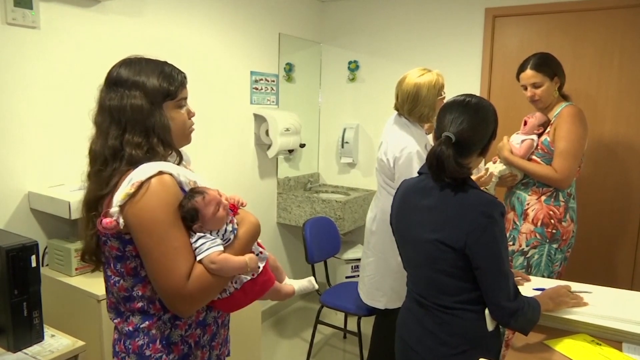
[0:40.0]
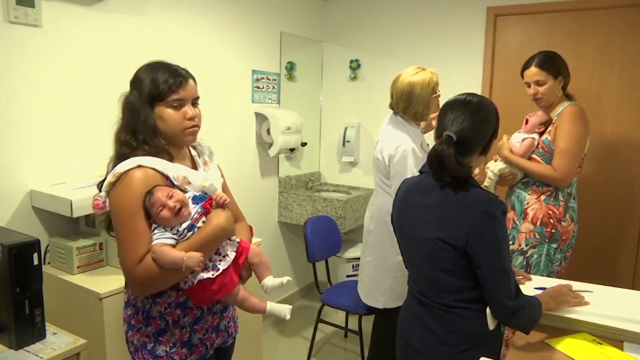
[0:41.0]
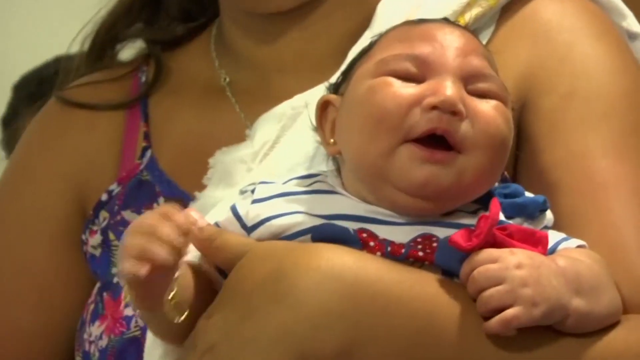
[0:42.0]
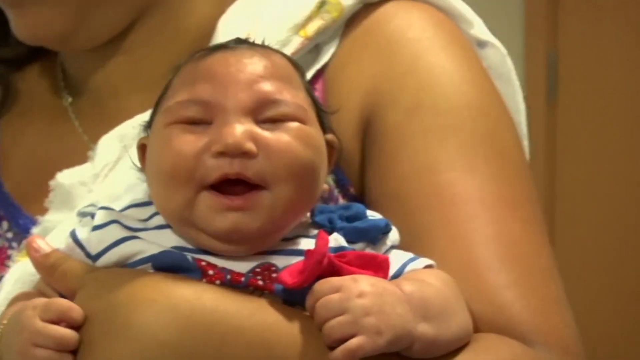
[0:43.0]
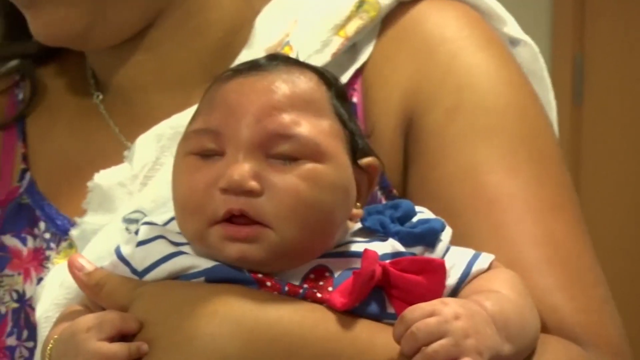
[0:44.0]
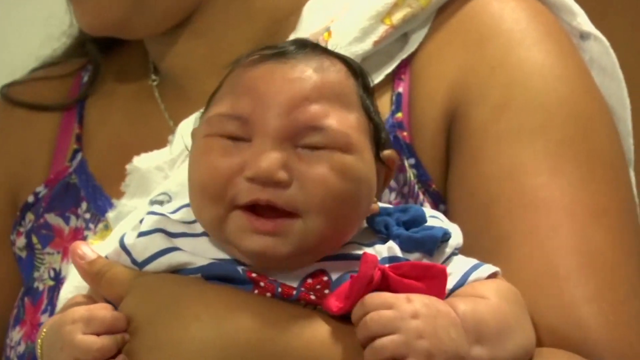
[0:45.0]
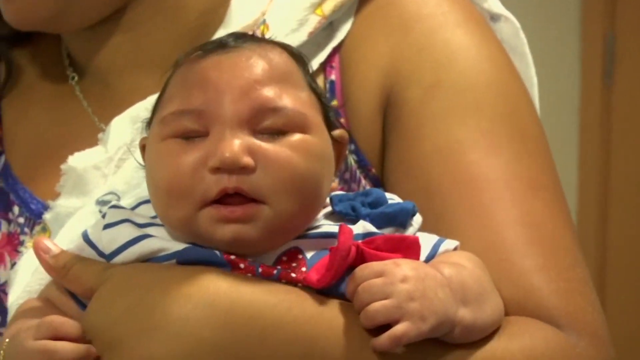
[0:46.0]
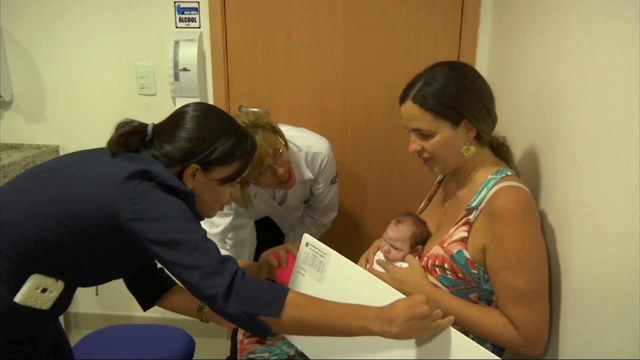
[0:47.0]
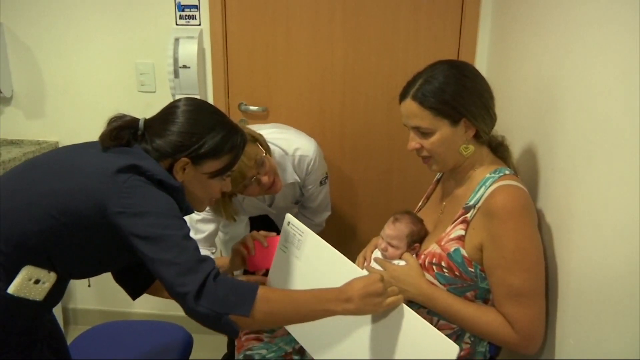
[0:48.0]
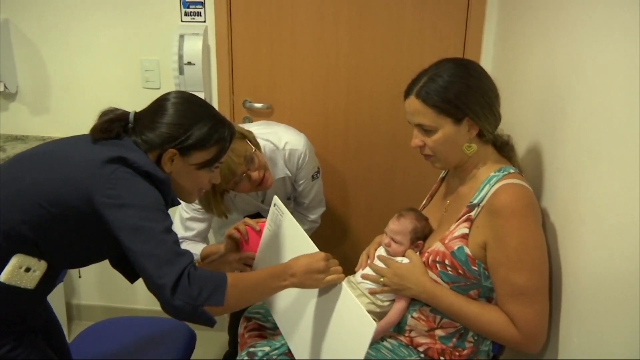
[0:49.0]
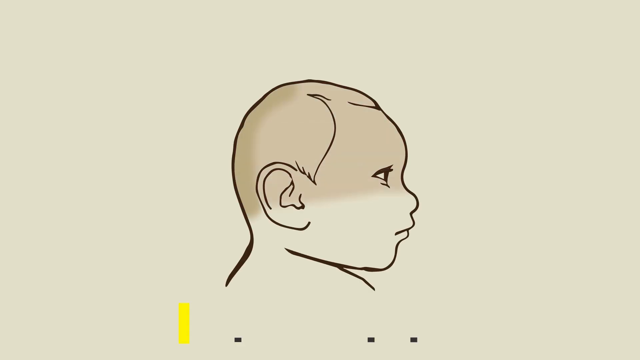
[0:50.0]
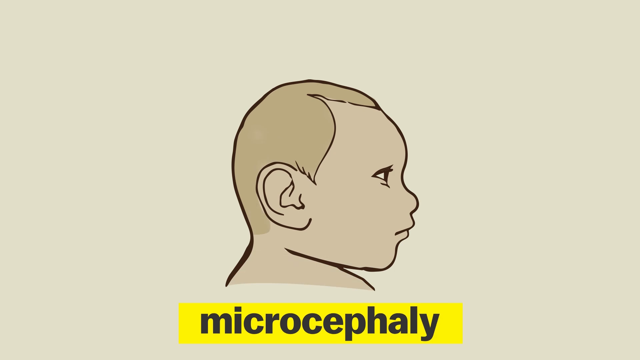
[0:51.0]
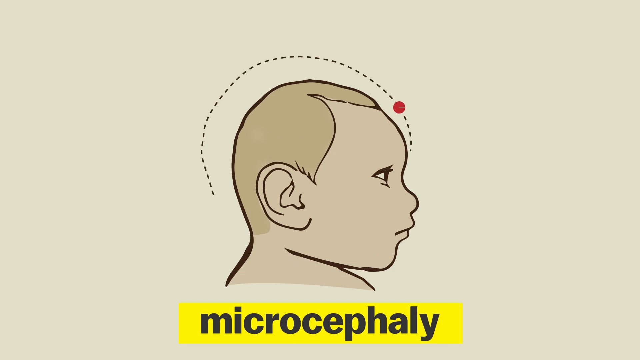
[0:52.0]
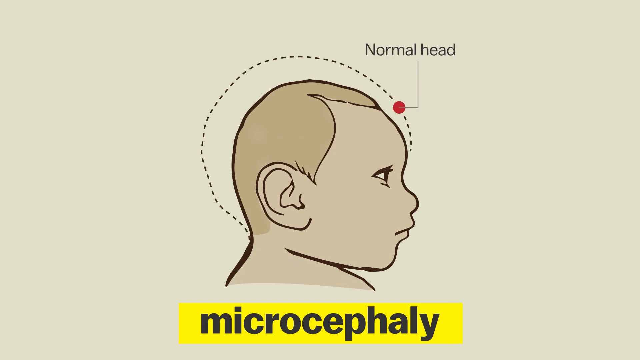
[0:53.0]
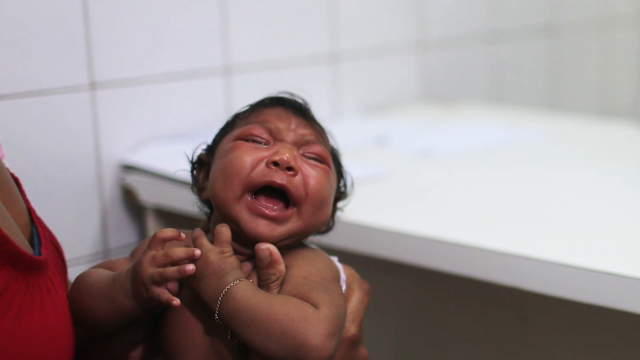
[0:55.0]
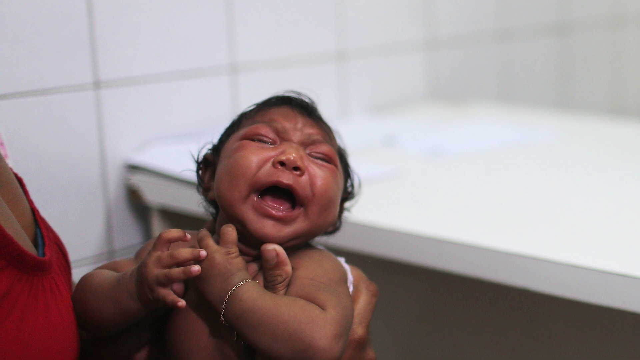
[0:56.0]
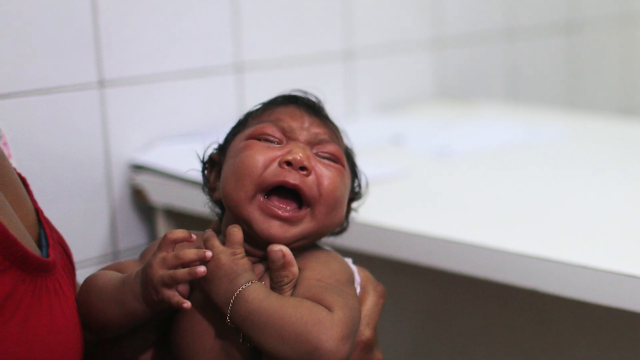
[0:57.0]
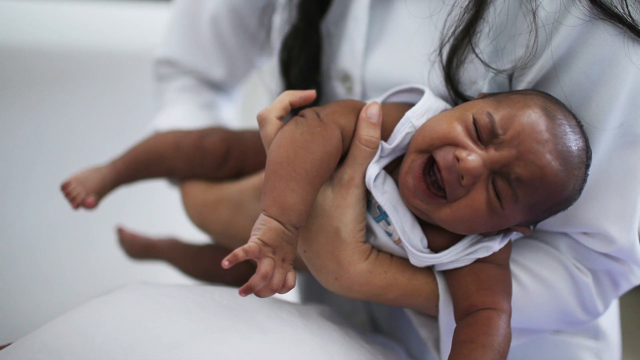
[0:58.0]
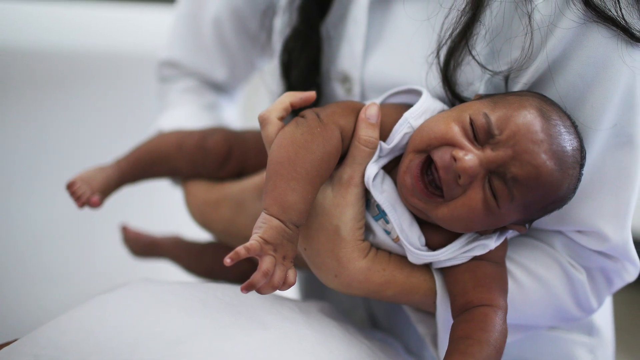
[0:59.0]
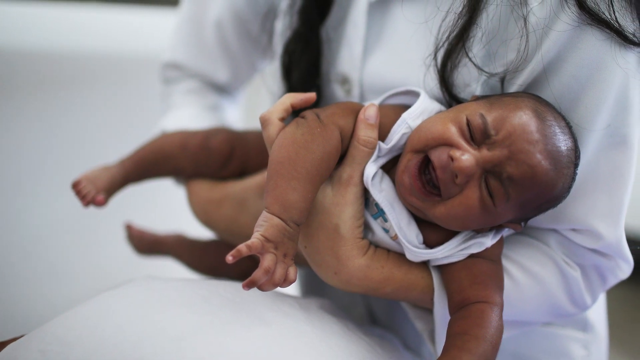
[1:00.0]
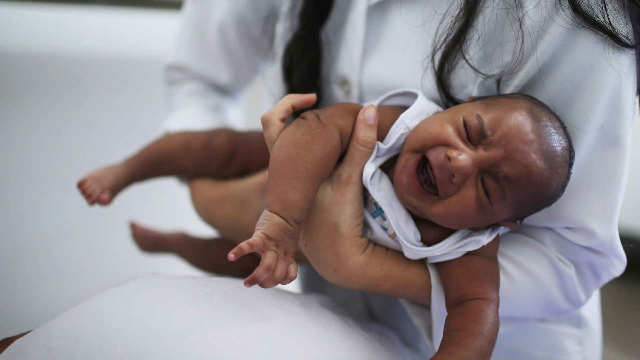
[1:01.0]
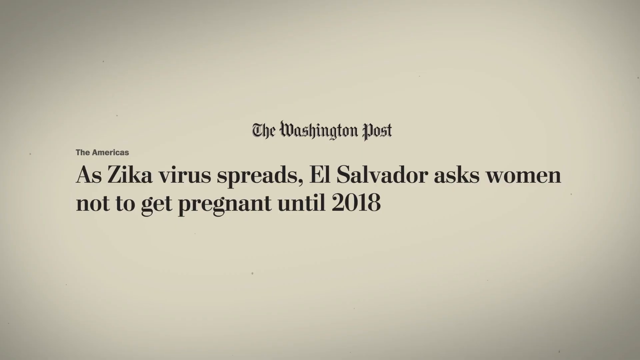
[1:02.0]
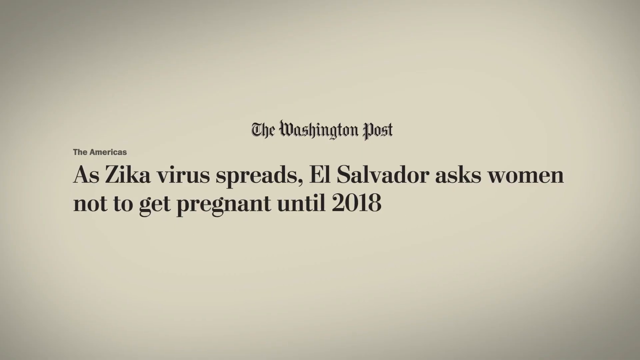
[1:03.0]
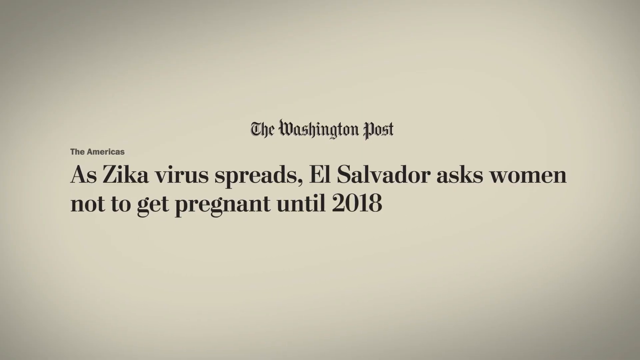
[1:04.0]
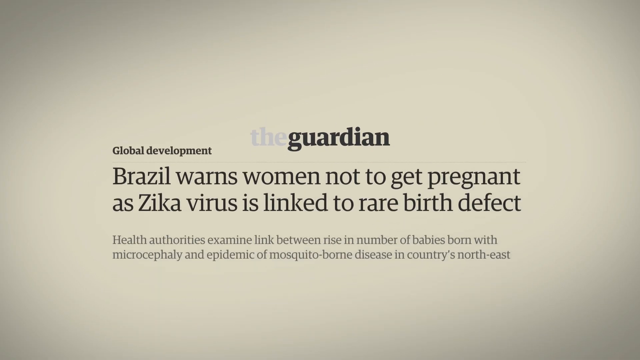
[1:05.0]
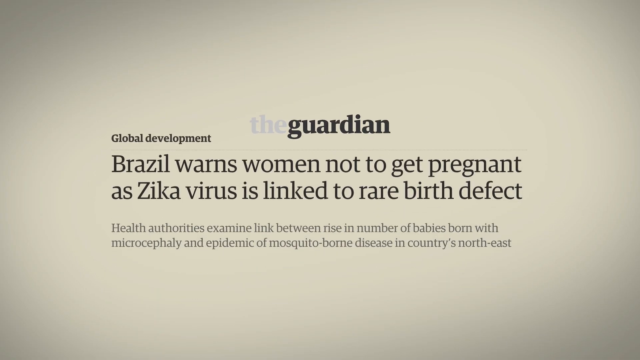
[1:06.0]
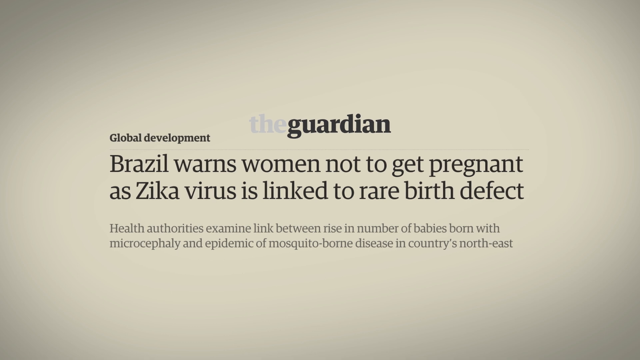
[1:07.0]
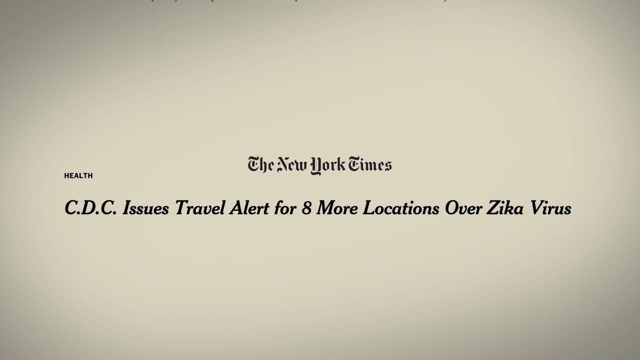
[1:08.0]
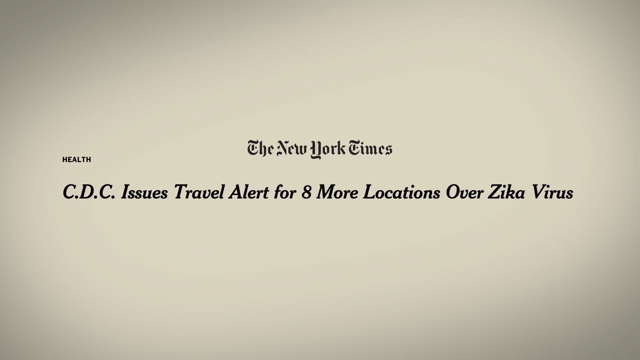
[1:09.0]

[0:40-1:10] The scene is still in a hospital or doctor's area, where a baby appears to have been born with a small head. A Washington Post headline about the Zika virus spreading mentions asking women not to get pregnant until 2018. A headline from the Guardian reads "Brazil warns women not to get pregnant as Zika virus is linked to rare birth defect," and a New York Times headline says the CDC issues a travel alert for eight more locations because of the Zika virus. The video returns to the doctor's office.